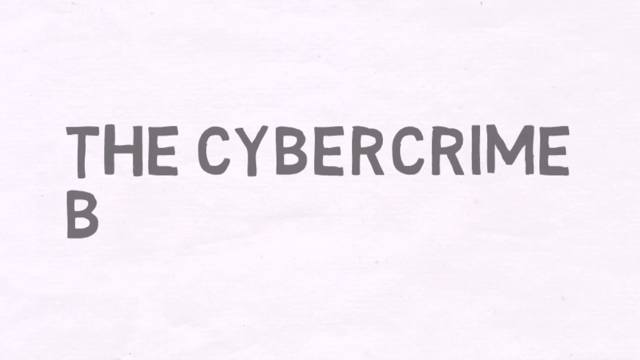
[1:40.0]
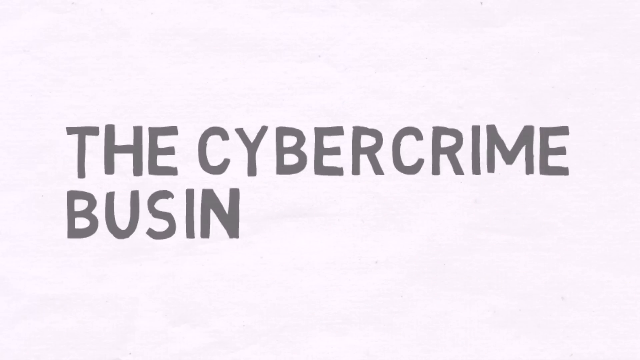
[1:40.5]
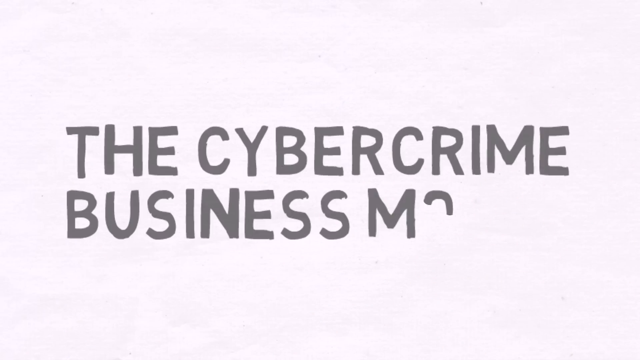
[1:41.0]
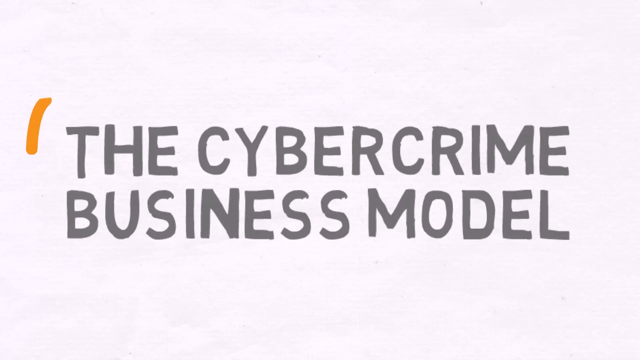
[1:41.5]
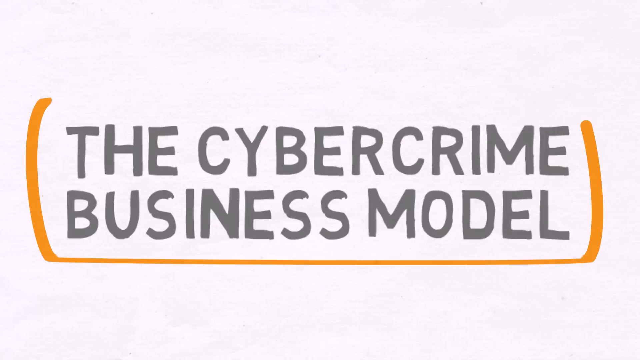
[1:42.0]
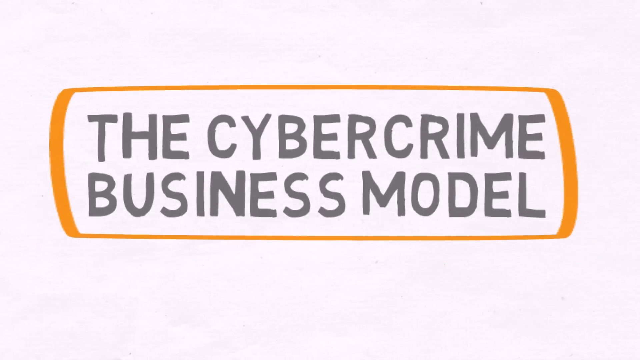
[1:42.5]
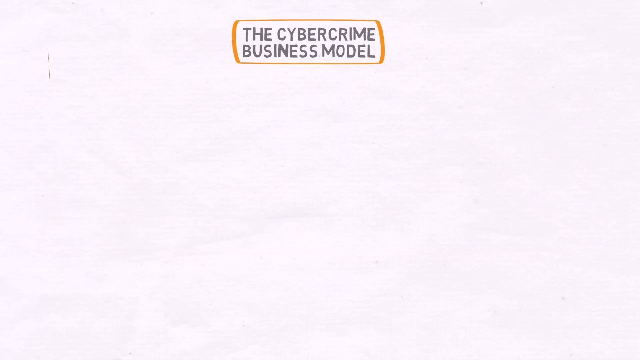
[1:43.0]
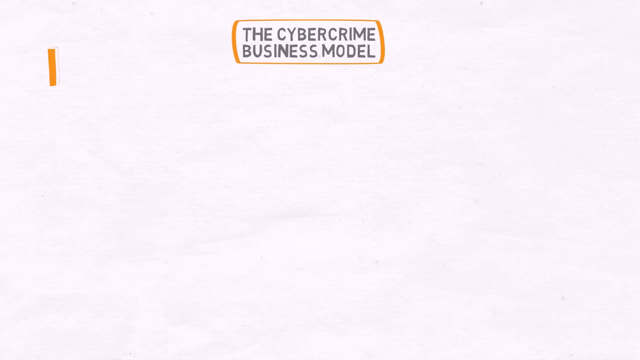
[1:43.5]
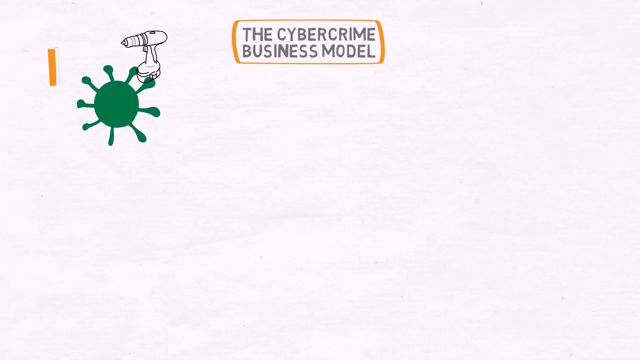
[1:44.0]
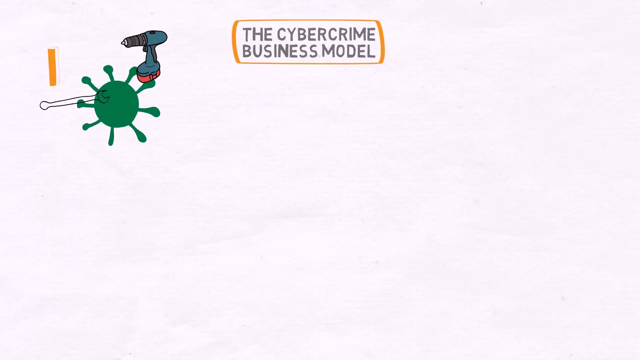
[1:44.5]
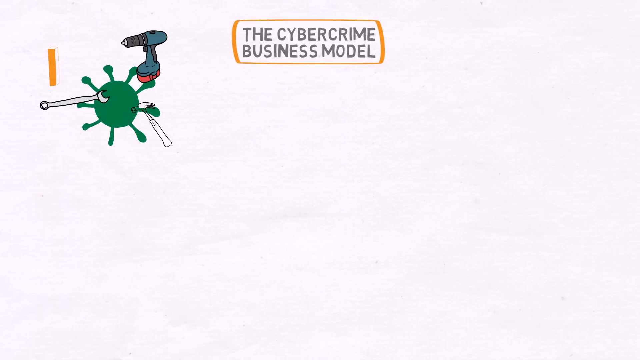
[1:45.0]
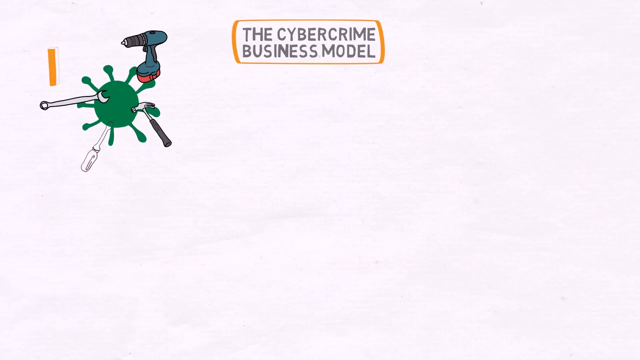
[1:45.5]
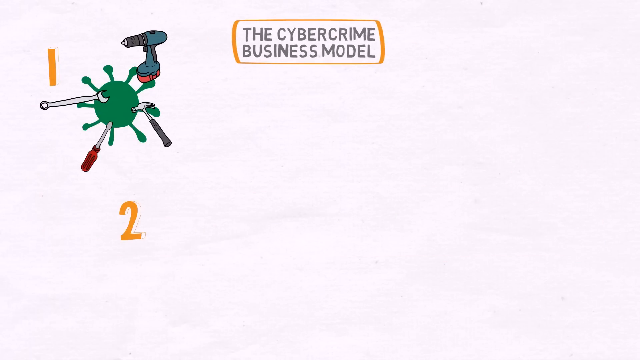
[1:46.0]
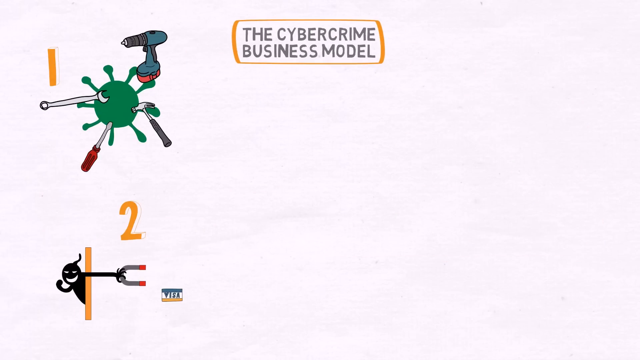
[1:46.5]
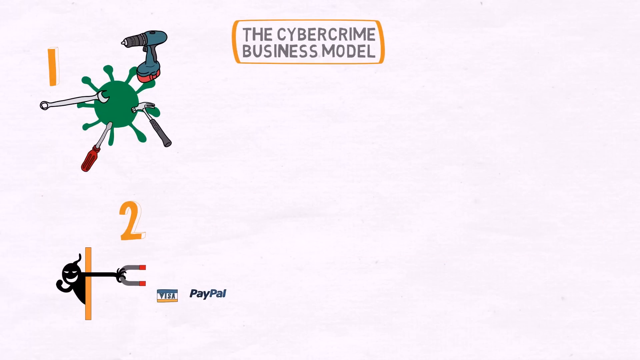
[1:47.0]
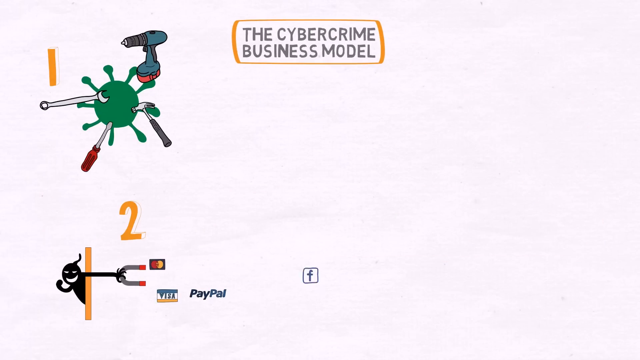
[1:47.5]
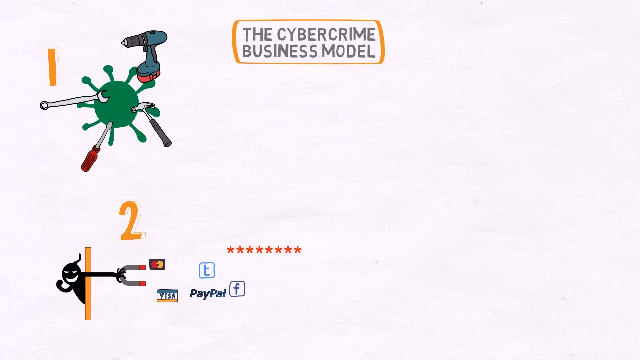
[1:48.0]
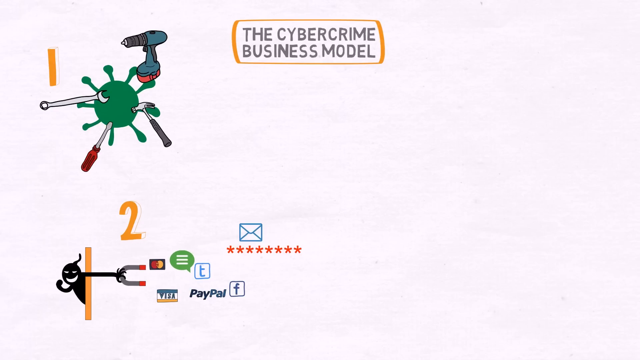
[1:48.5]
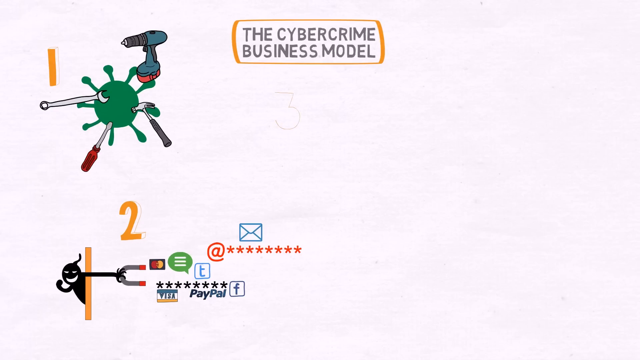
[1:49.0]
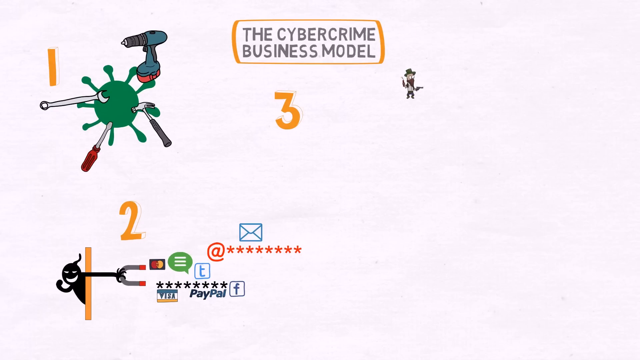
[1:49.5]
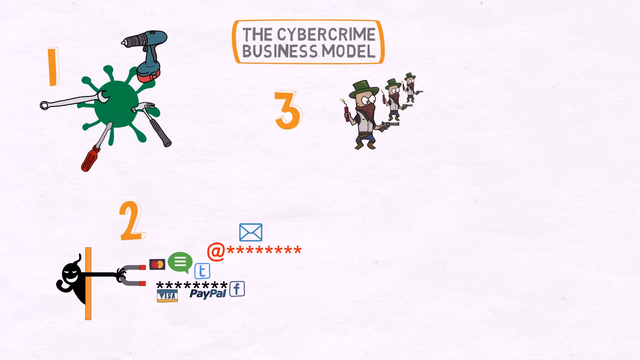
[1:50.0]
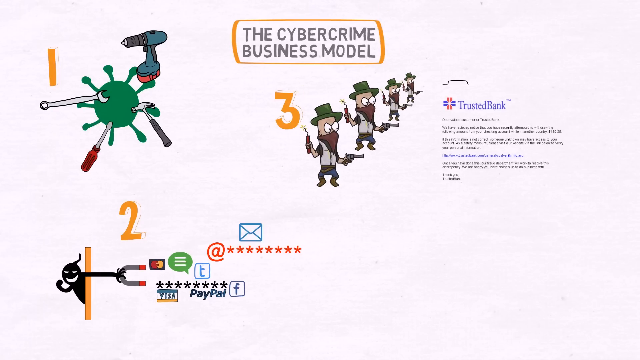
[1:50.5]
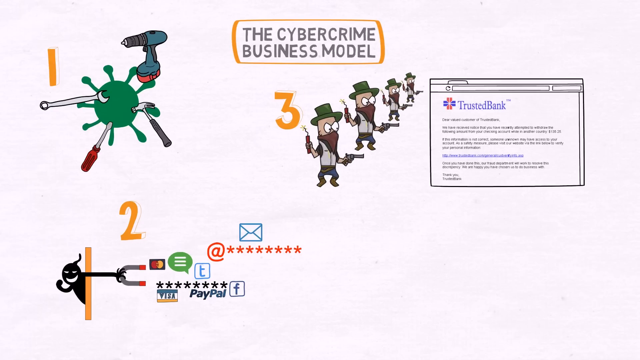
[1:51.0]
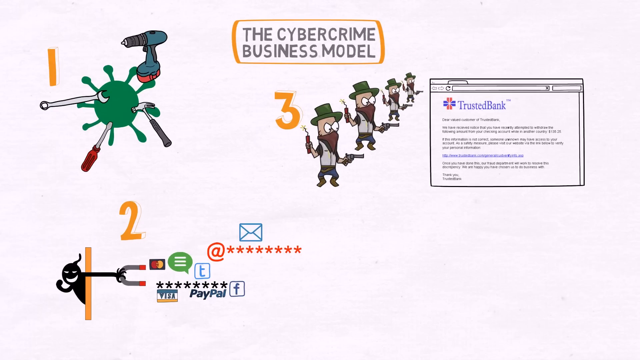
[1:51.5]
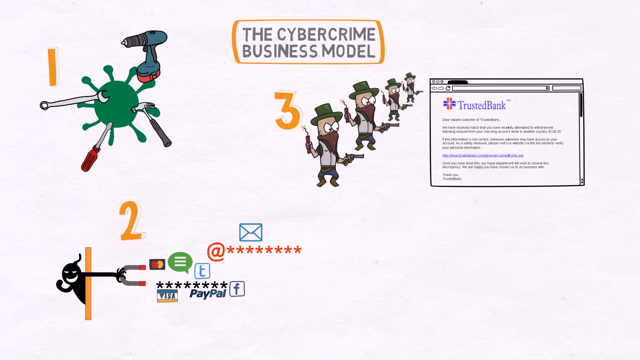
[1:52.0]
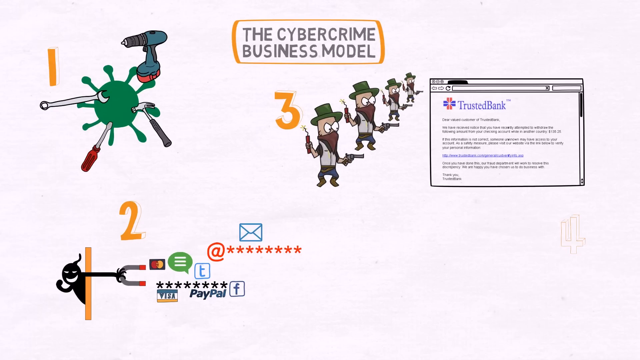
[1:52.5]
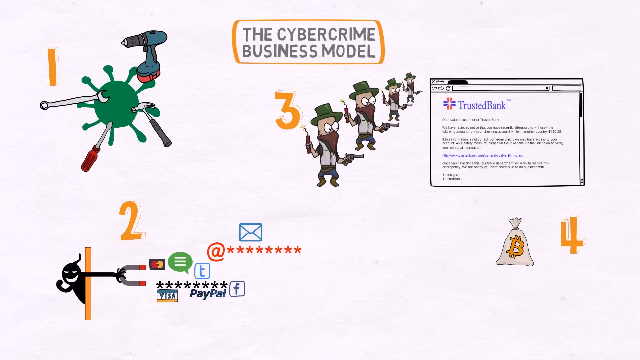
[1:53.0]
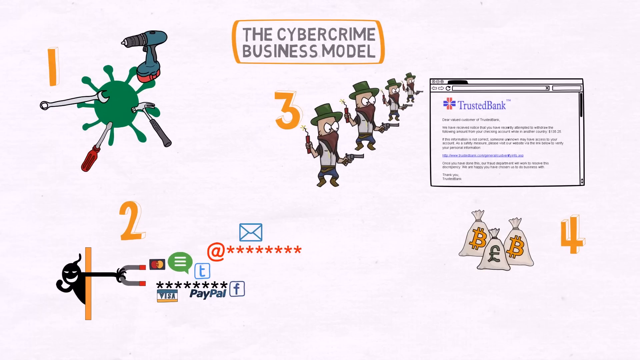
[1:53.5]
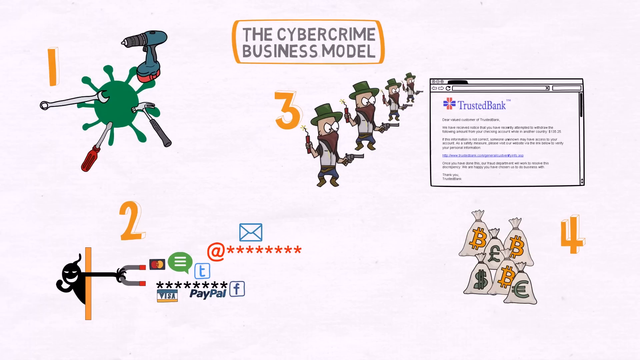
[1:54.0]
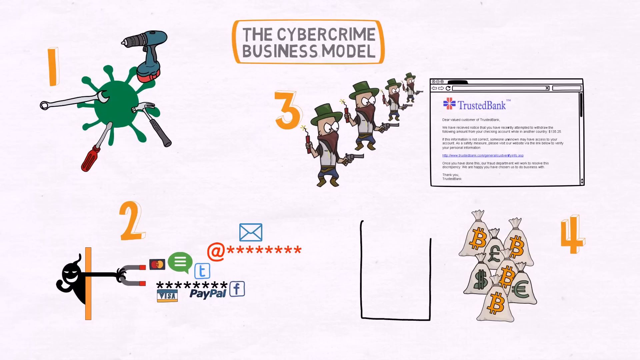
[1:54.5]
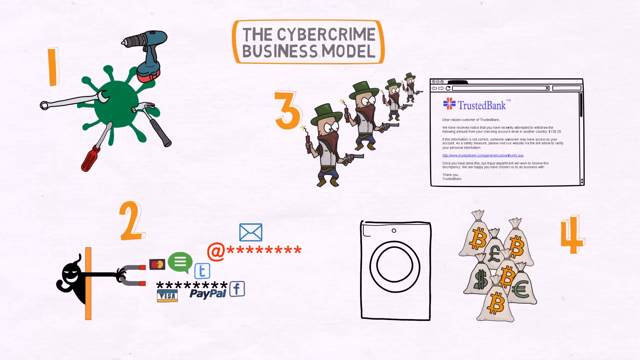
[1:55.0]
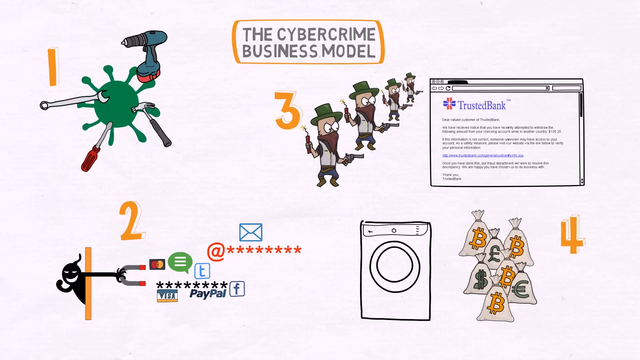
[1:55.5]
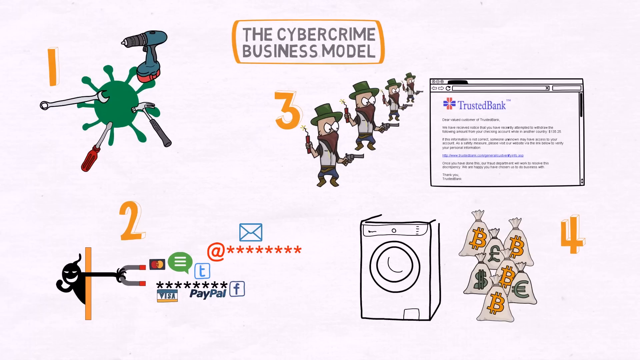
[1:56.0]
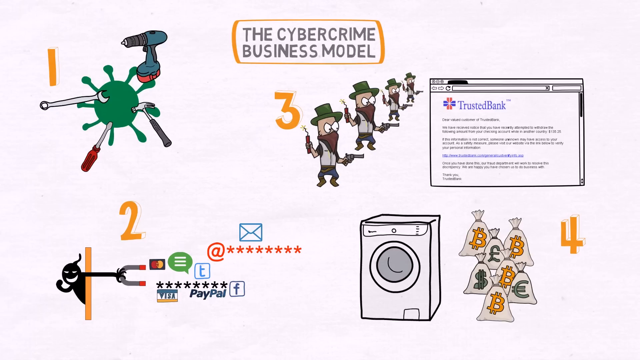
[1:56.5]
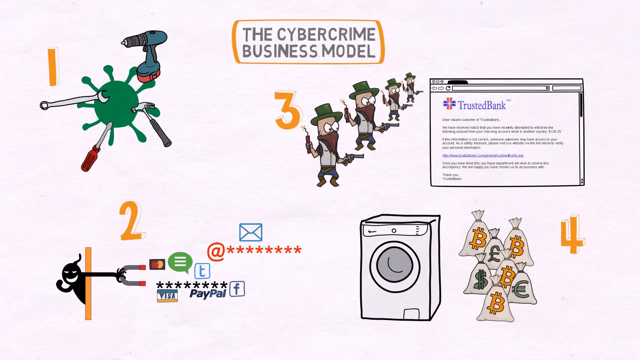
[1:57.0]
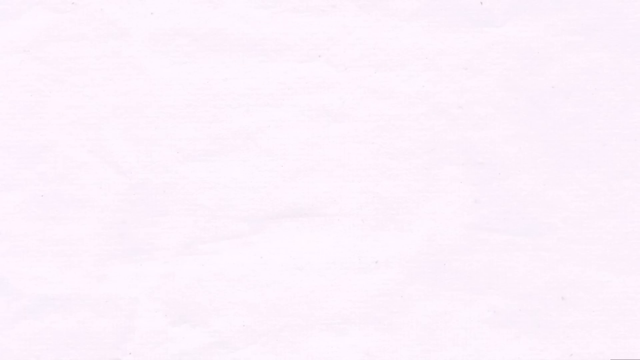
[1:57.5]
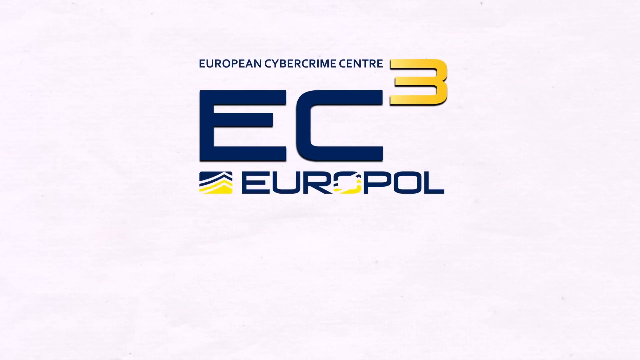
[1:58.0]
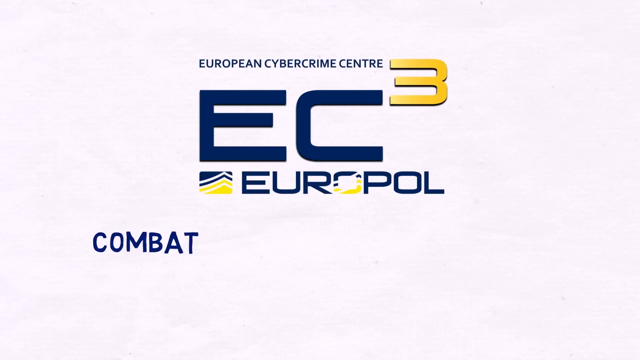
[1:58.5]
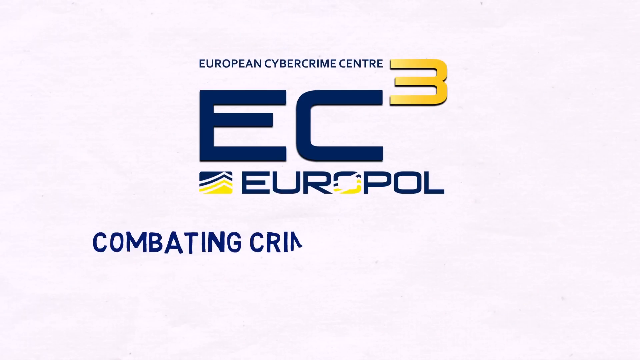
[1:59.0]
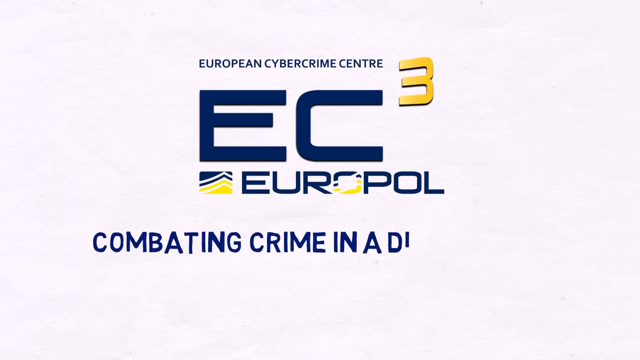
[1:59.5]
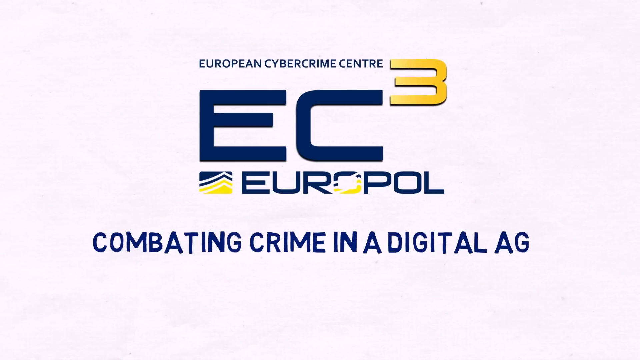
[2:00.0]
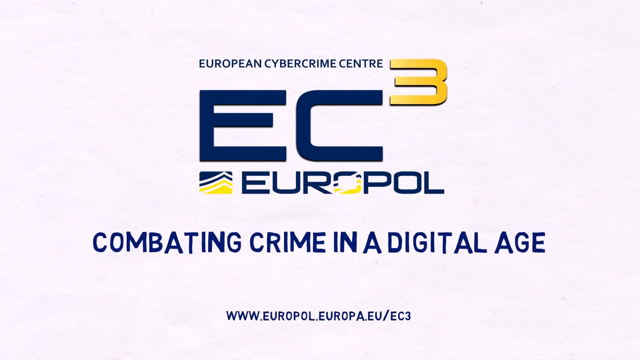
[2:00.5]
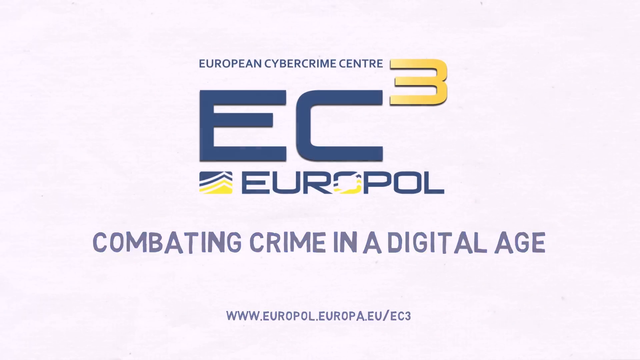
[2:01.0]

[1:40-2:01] On a white screen, the text "The cybercrime business model" appears letter by letter in large grey font. It is then bordered in a kind of mustard yellow and rises to the top centre of the screen. Another of the tentacled circles appears in the top left corner, this one coloured green. To its top right are a drill and a hammer, at the top left to mid left a spanner, and at the bottom left a screwdriver, on the left of this diagram. There is a basic number one in orange, and below that a two in orange. Below that is the magnet diagram seen earlier: the malevolent figure is behind an orange bar or door, and his hand creeps out to hold the magnet, which attracts a Visa card, a PayPal image, a MasterCard image, an envelope and a chat bubble from across the other side of the screen. A number three then drops in just below the "The cybercrime business model" text, slightly to its left. The cowboy appears, but now four of him, reducing in size diagonally from bottom to top, each with the green hat, brown face covering, dynamite and pistol as before. To the right of the cowboys is the email from Trusted Bank. Below that, on the right side of the screen, is a four, and next to it a depiction of bags of Bitcoin, with three of the bags featuring the British pound, euro and dollar symbols. To the left of these bags is a washing machine, presumably indicating the laundering of money.